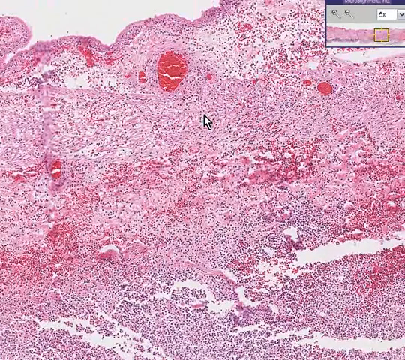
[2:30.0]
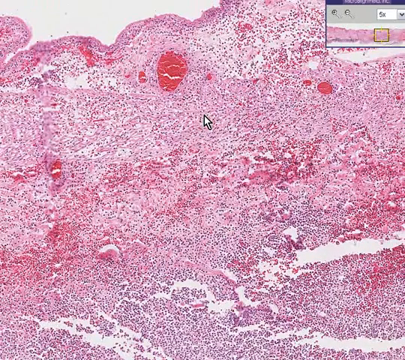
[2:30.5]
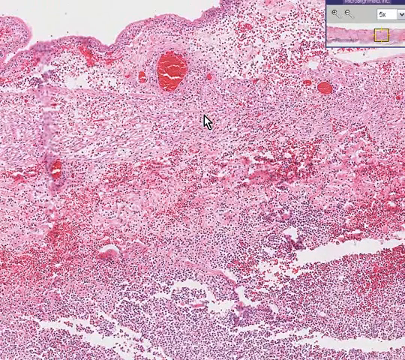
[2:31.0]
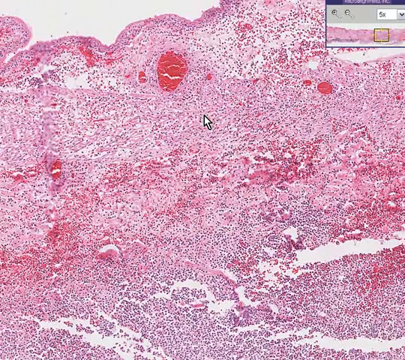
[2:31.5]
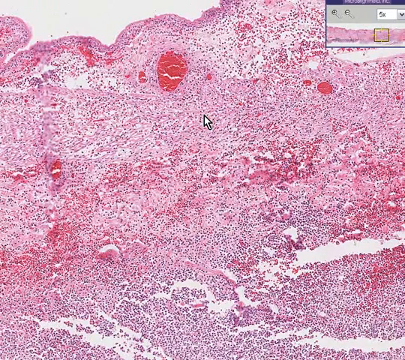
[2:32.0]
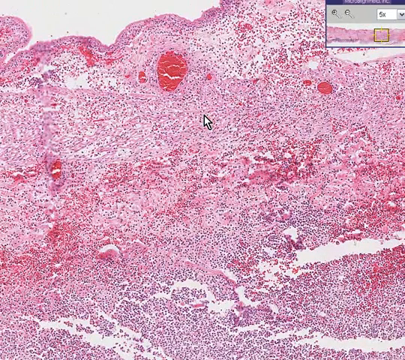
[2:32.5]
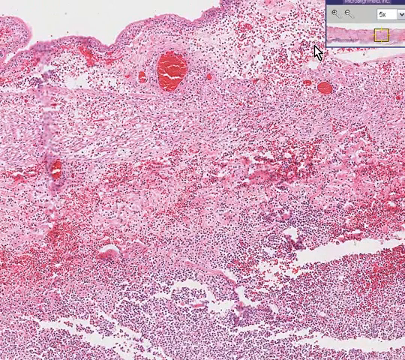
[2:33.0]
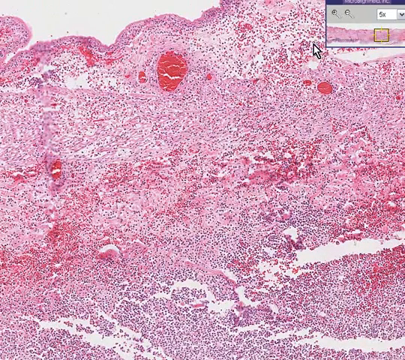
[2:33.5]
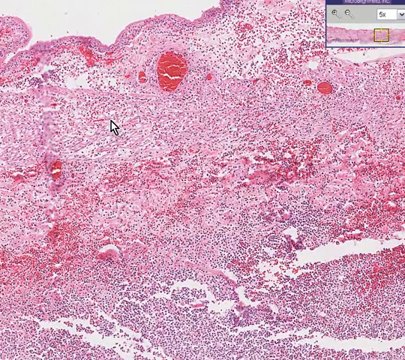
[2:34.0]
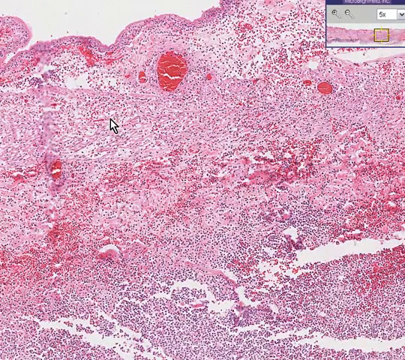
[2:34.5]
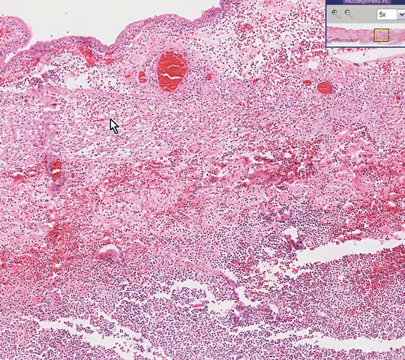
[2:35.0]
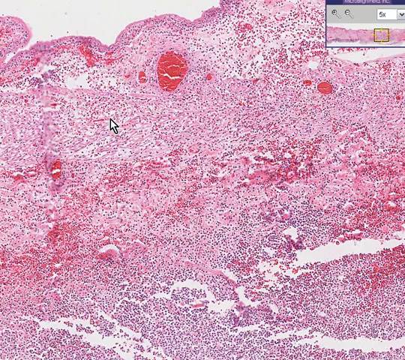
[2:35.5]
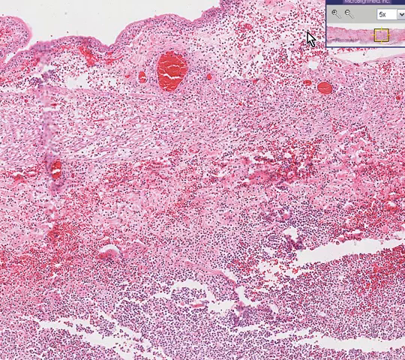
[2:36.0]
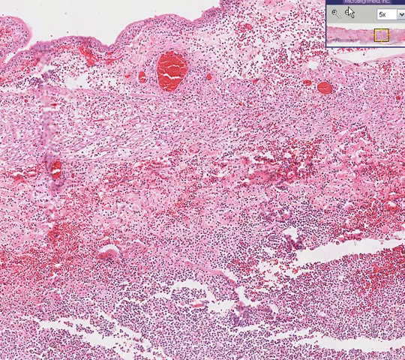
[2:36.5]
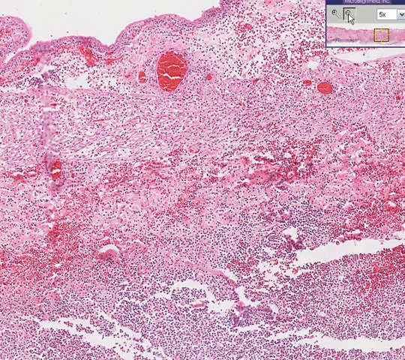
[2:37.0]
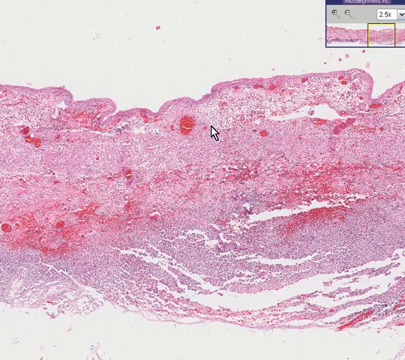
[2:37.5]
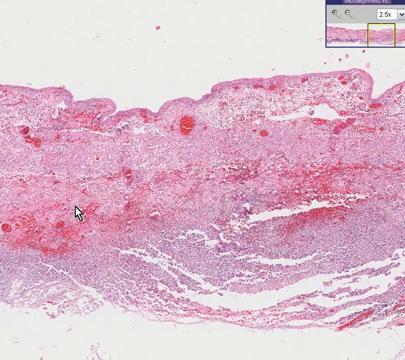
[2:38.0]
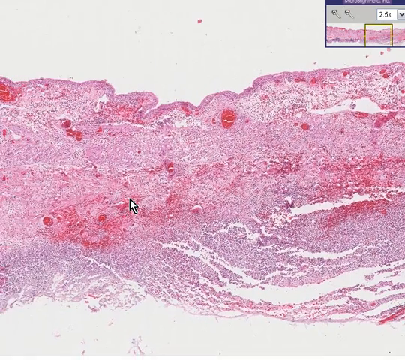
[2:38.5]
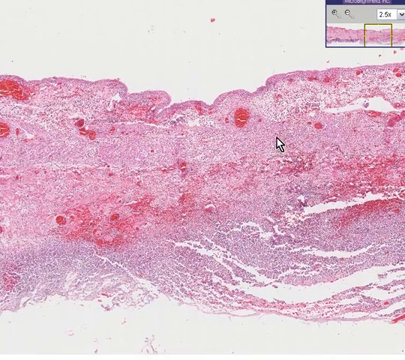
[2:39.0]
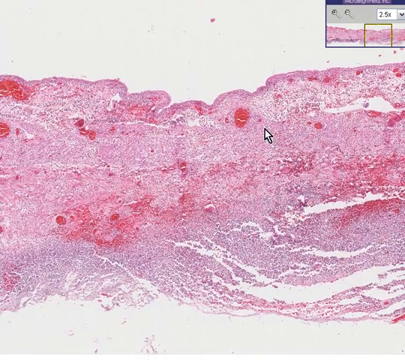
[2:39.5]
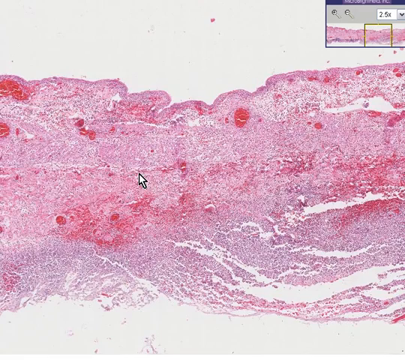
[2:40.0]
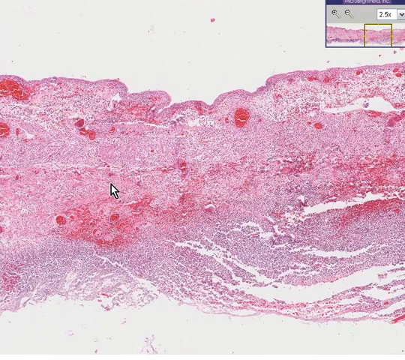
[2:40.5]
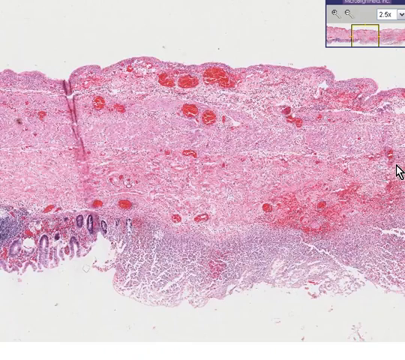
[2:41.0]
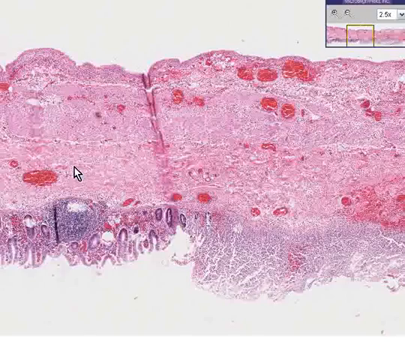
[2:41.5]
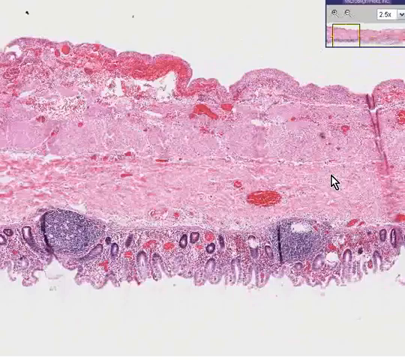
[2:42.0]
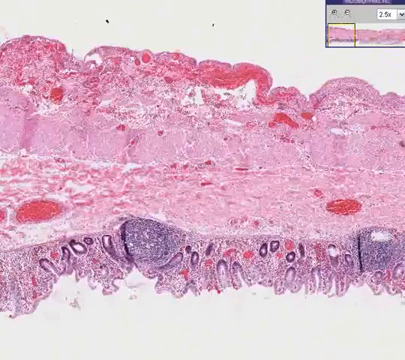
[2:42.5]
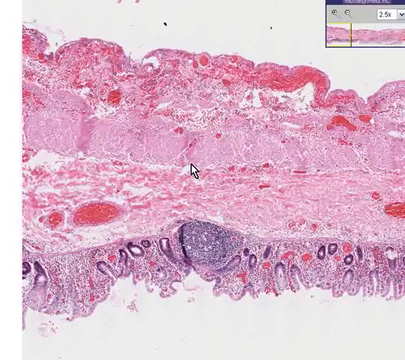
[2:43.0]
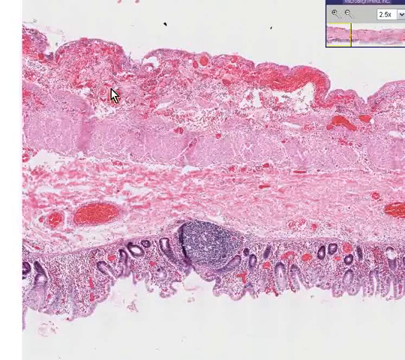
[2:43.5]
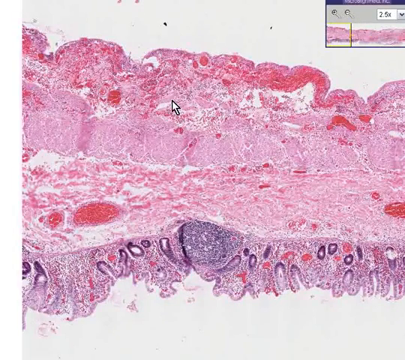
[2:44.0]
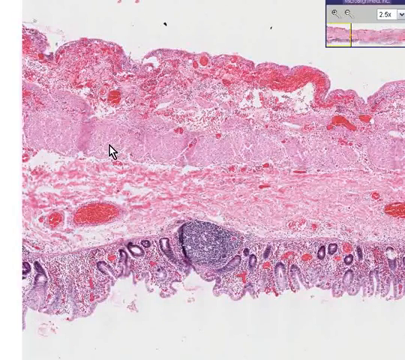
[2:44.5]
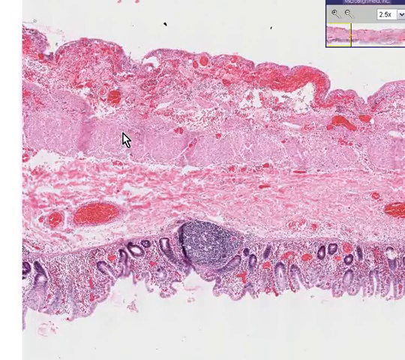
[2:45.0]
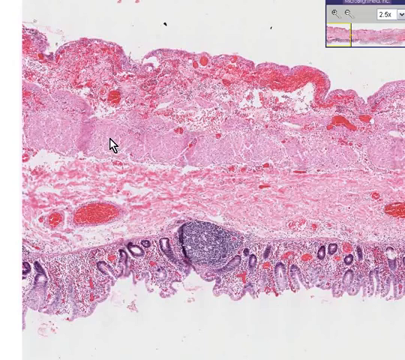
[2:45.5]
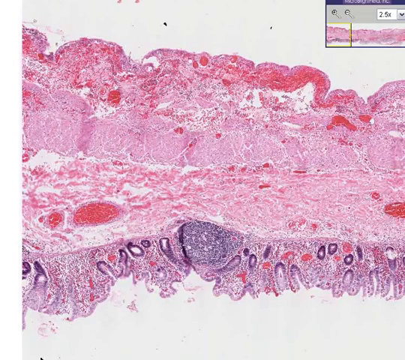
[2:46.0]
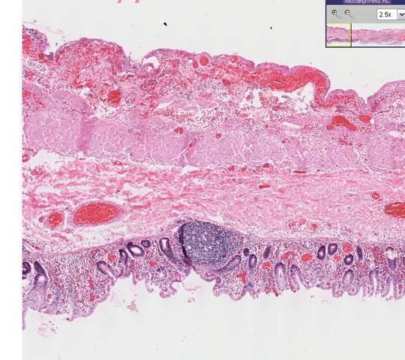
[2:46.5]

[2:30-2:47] What looks like a slice of tissue under a microscope is shown on a computer. The tissue looks kind of wavy at the top, sort of like clouds. It is pink and purple with white lines running all through it and large red or dark pink dots. At the top right, a small box shows the same image with a square indicating the current position, and it reads "5x". The mouse arrow clicks the zoom out button and the image zooms out. The person makes a little circular motion with the arrow to explain something, scrolls the image to the right, and makes another little circular motion. The cursor then sits in one spot doing nothing, and the video ends.